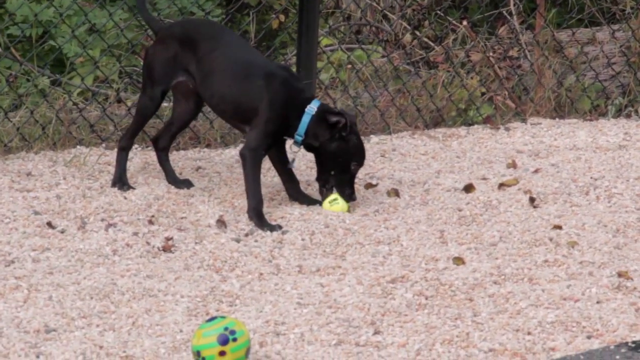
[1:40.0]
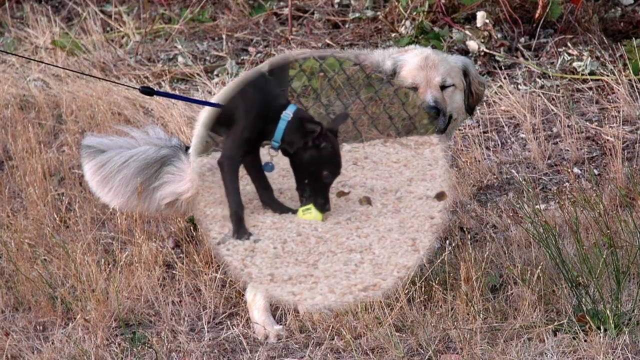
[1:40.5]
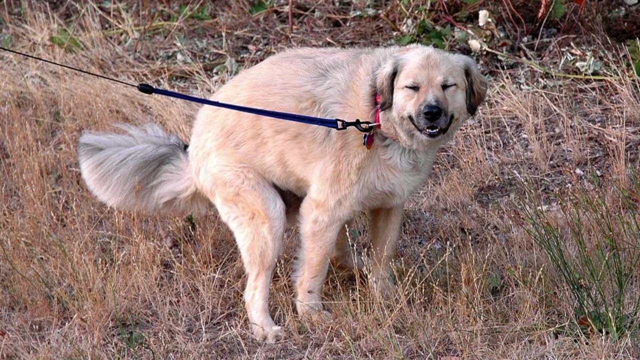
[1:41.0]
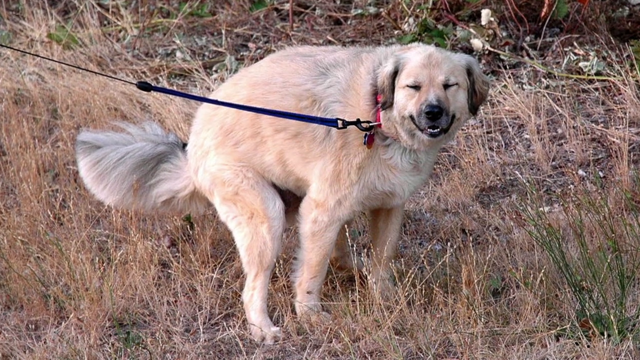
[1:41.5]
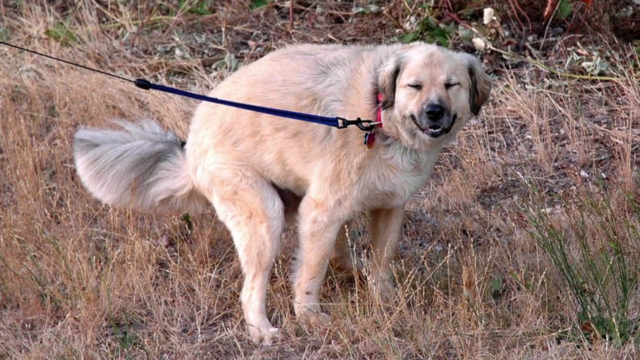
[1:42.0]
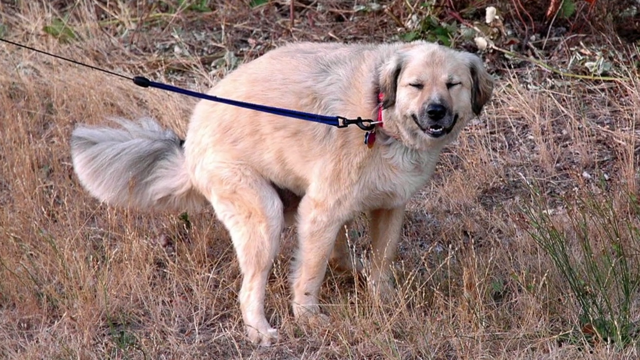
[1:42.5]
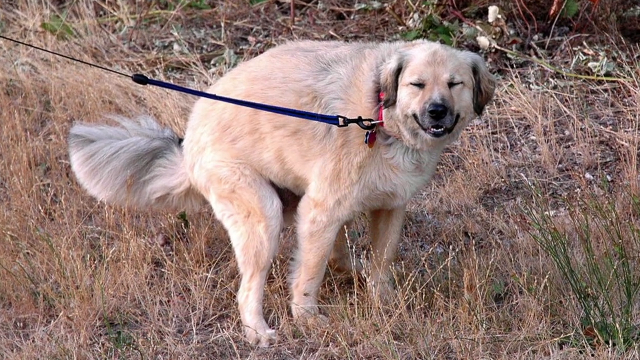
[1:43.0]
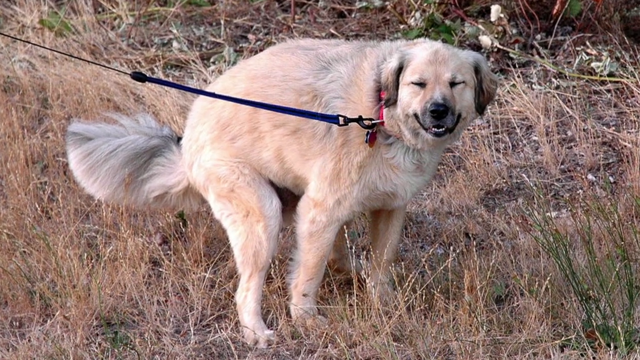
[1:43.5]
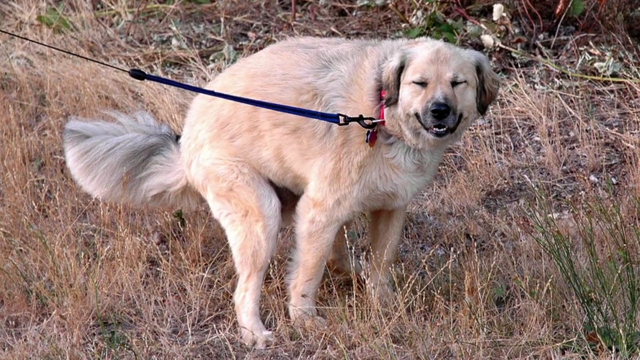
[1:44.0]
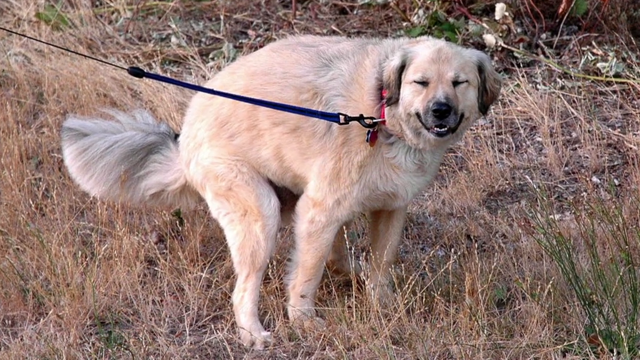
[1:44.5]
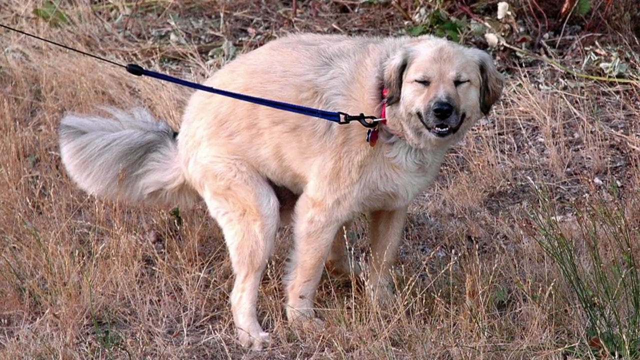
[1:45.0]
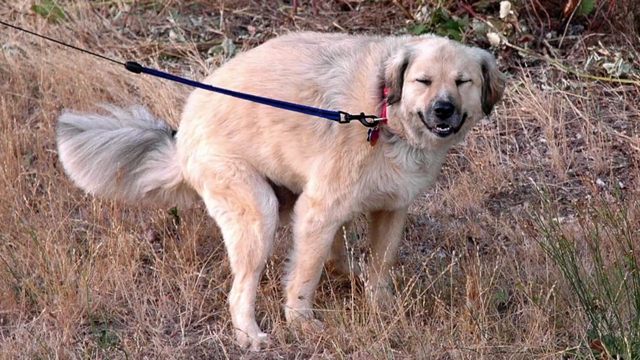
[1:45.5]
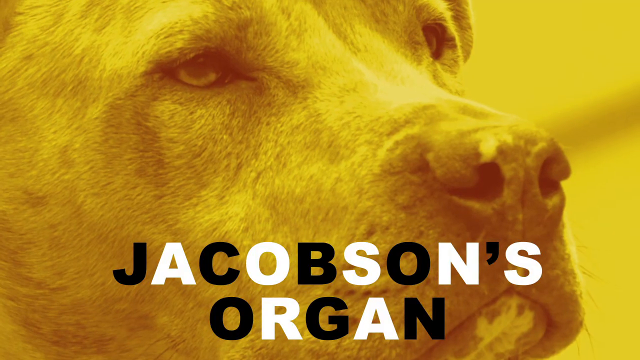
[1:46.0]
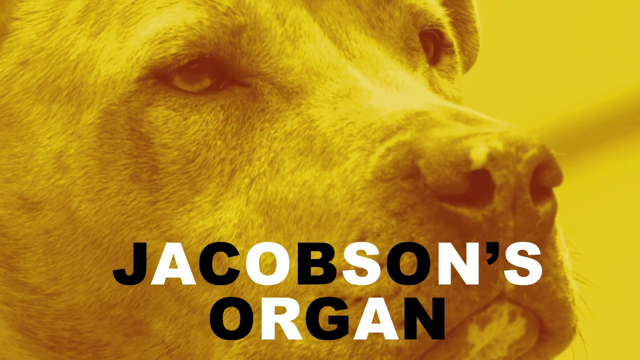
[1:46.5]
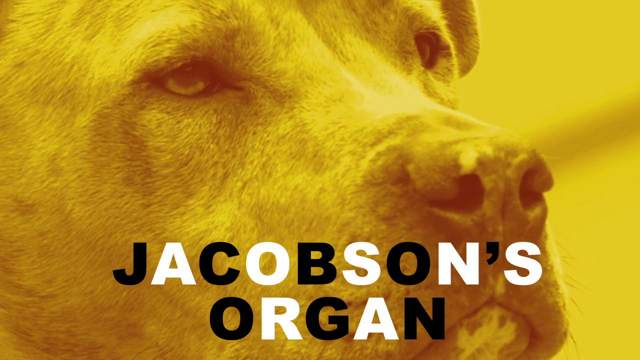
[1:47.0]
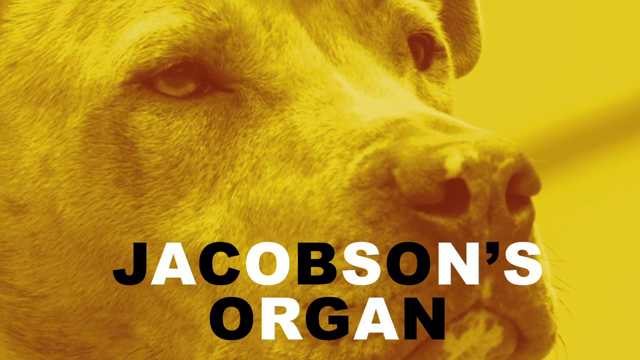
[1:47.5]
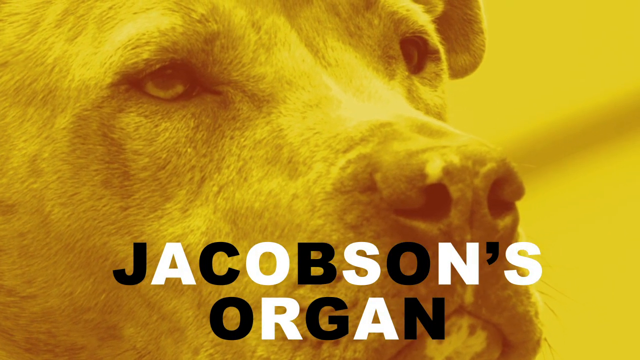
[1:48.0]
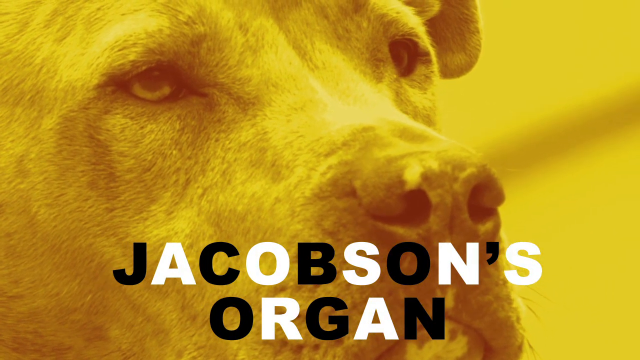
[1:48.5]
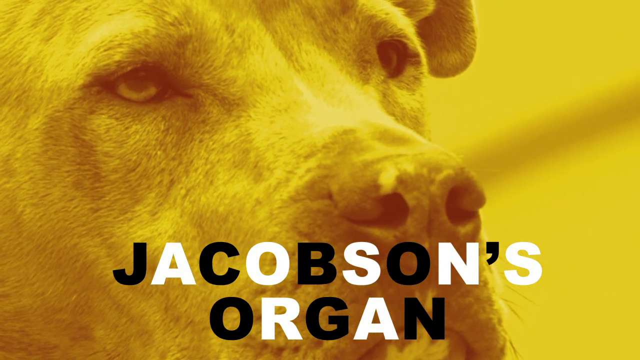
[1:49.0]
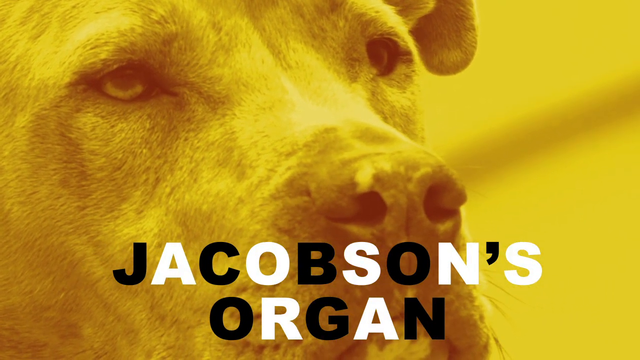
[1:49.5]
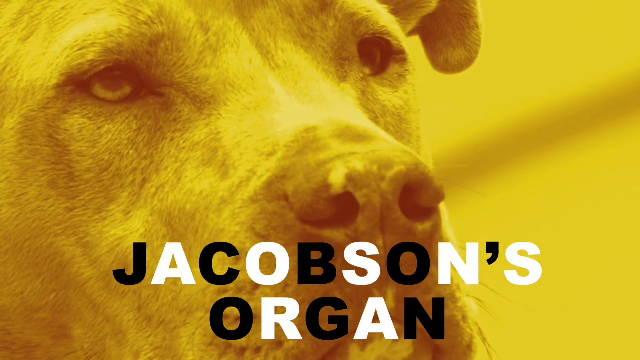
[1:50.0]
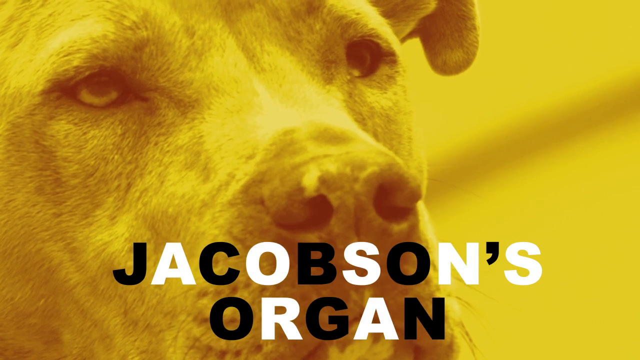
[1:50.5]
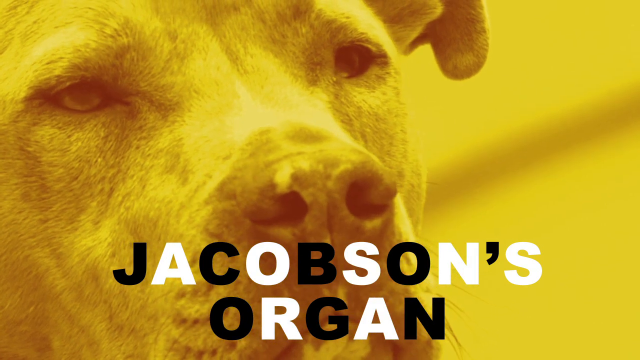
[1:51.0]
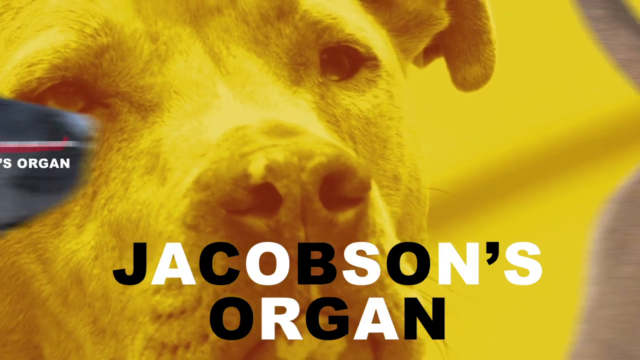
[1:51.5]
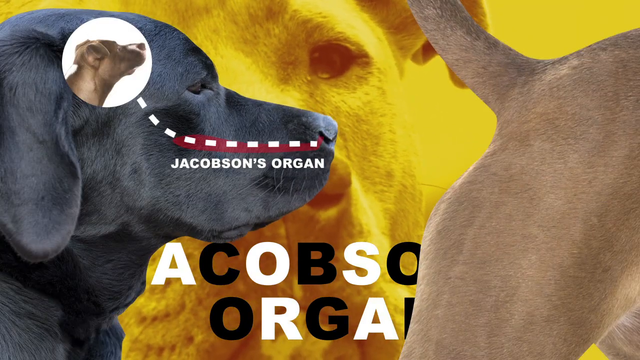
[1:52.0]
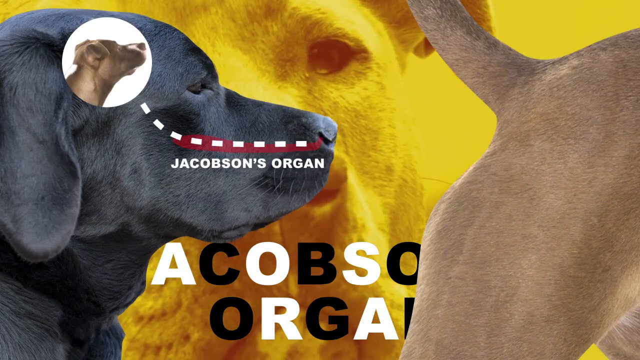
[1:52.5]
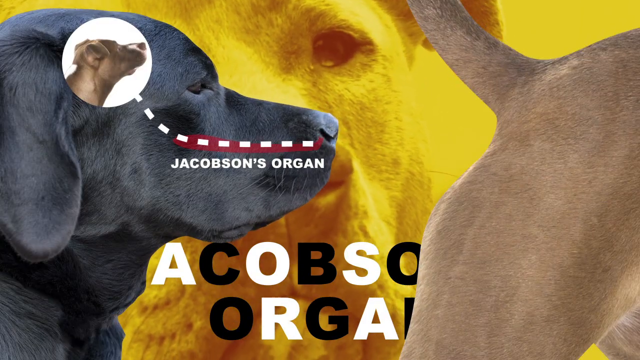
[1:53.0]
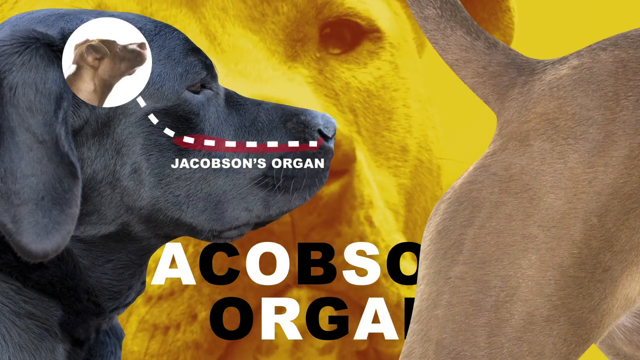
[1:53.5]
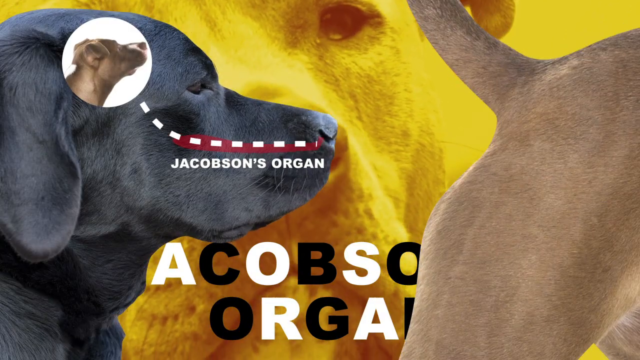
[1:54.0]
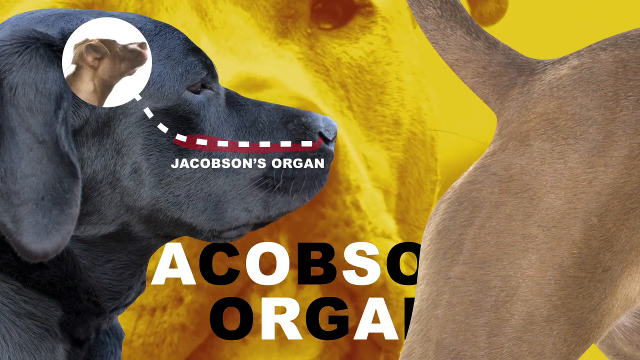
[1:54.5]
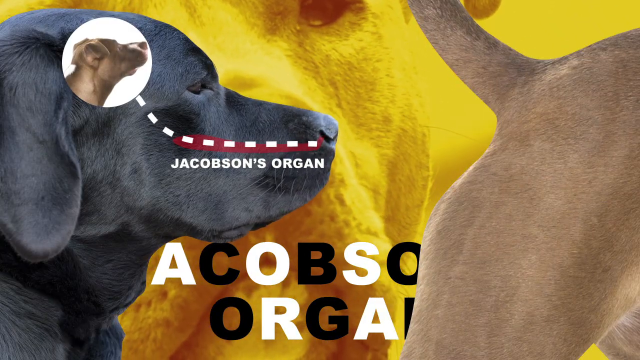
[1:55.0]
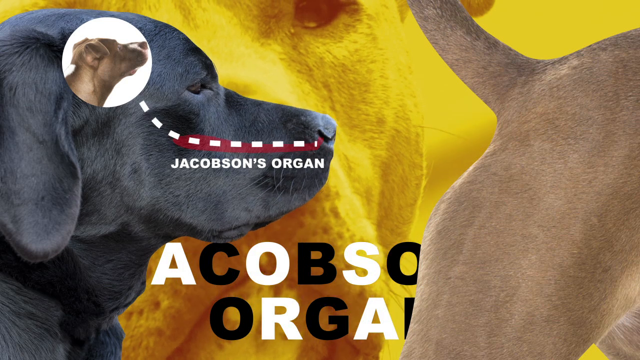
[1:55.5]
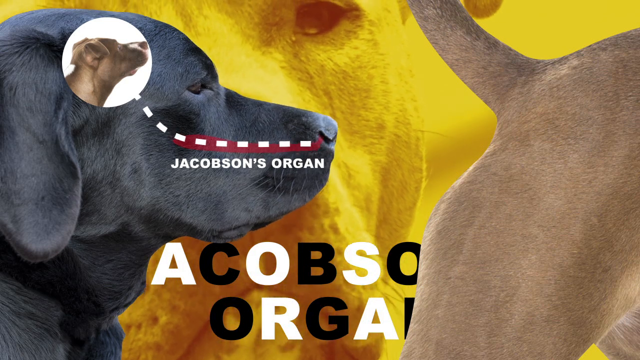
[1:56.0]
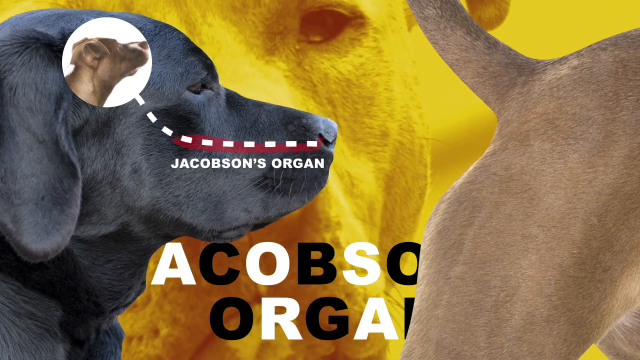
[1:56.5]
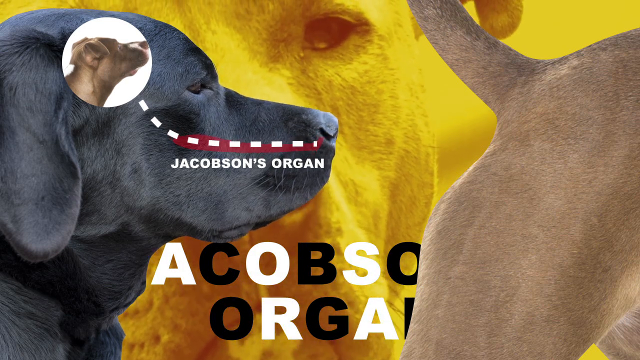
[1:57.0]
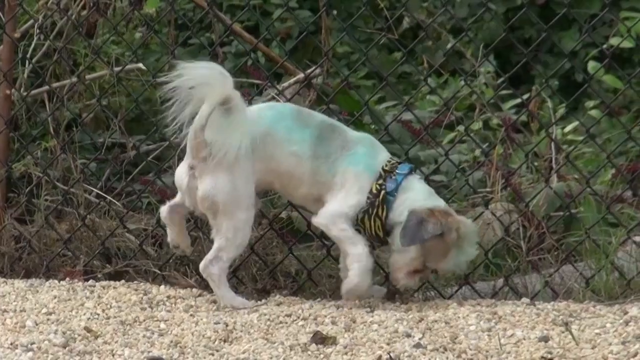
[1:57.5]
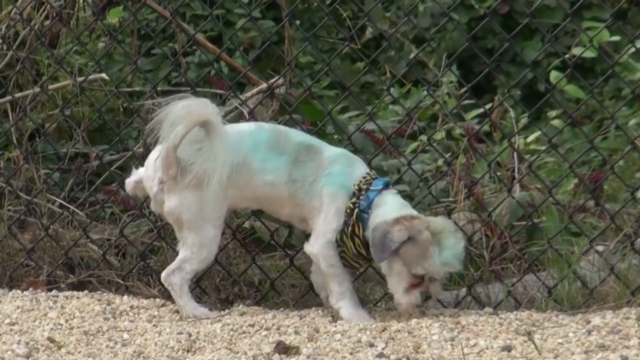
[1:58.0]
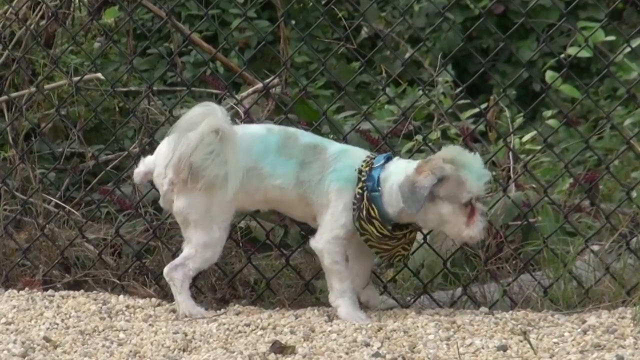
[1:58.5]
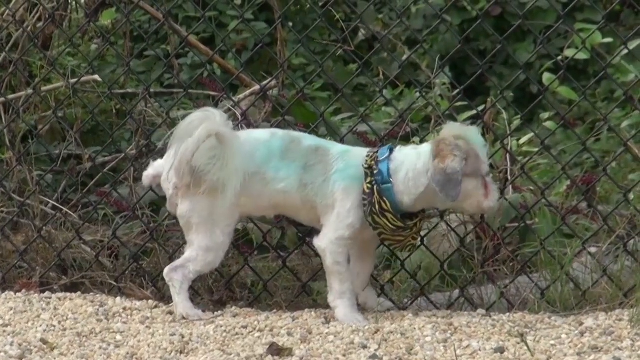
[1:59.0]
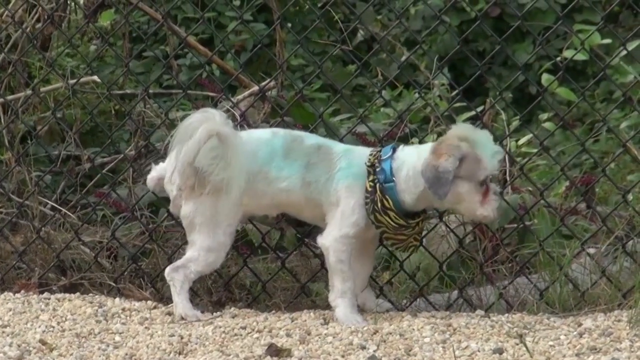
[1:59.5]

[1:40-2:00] A small black dog plays with a ball in a backyard area, and then a large dog defecates in a field. A close-up image of a dog's face follows, with the words "Jacobson's organ" below it. The video also shows dogs peeing on fences.